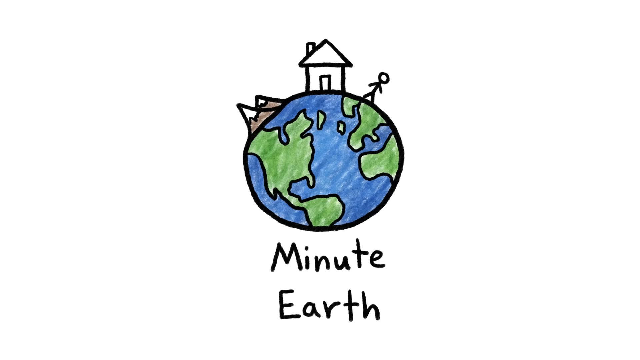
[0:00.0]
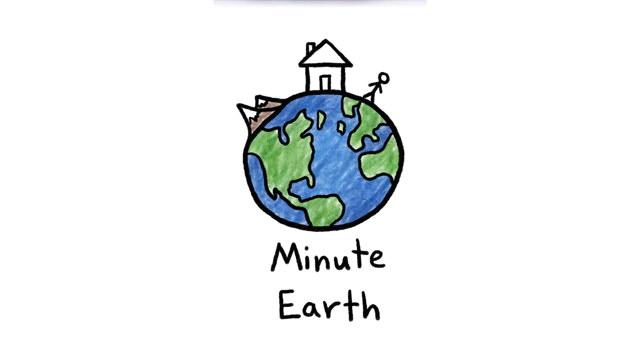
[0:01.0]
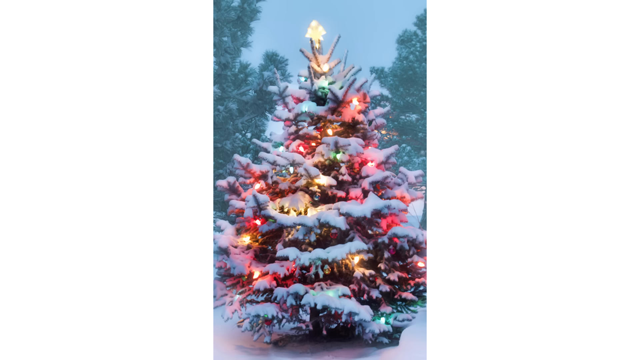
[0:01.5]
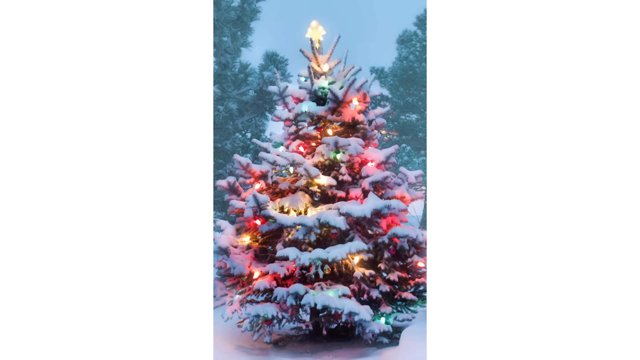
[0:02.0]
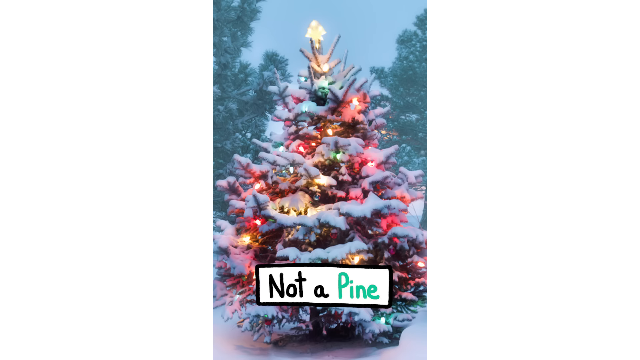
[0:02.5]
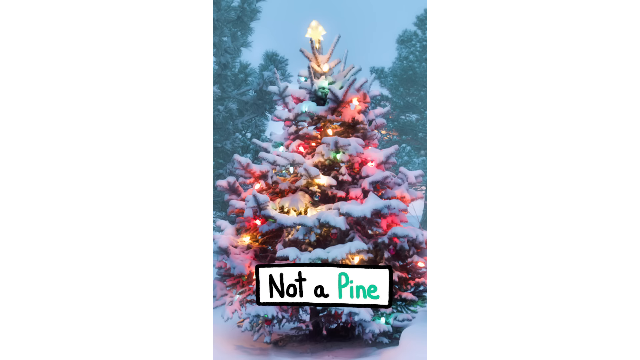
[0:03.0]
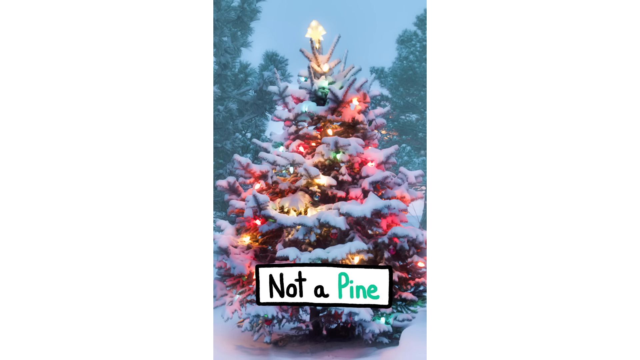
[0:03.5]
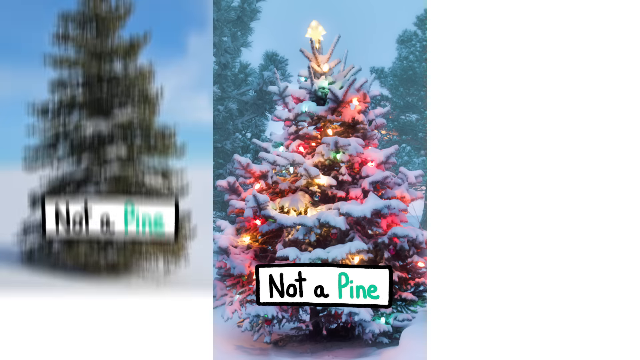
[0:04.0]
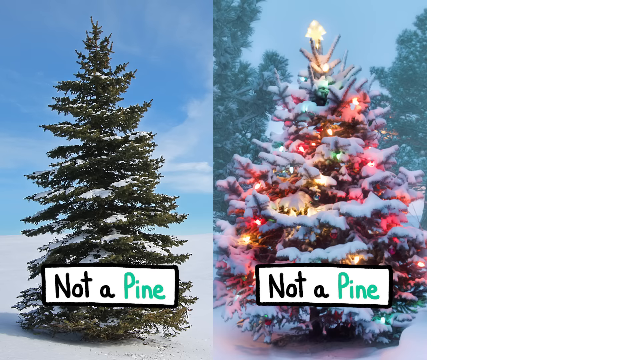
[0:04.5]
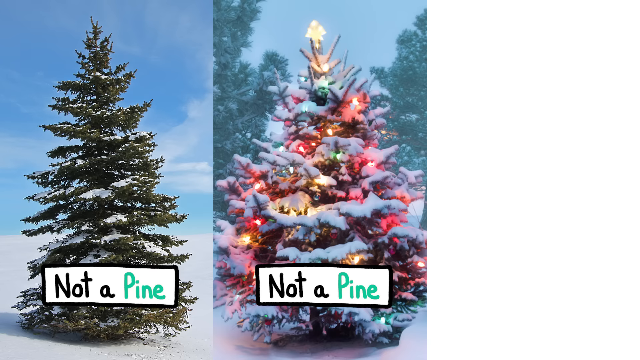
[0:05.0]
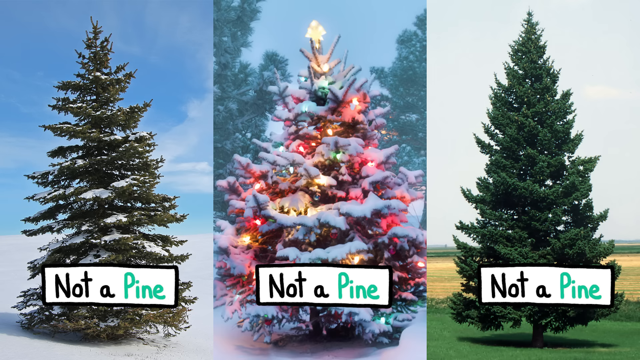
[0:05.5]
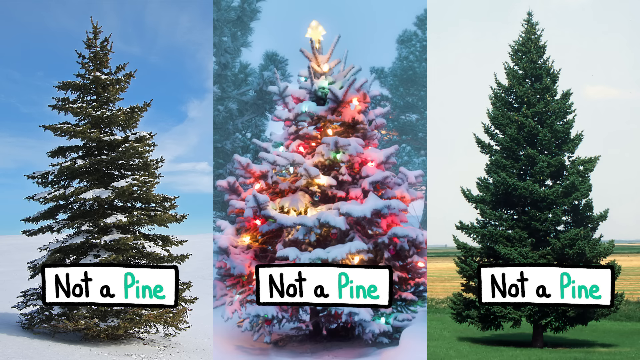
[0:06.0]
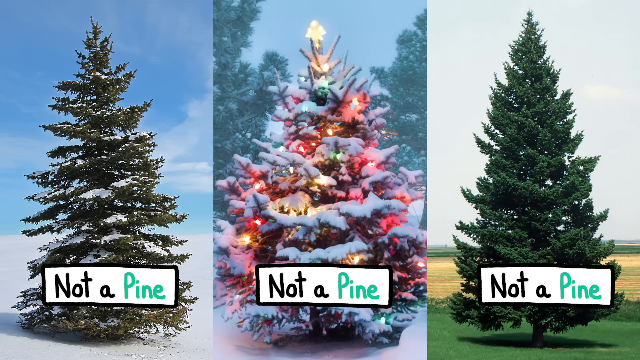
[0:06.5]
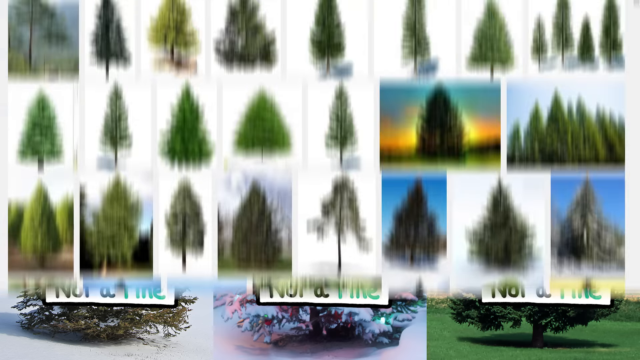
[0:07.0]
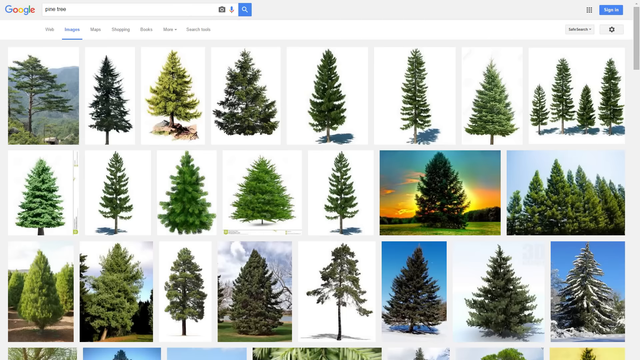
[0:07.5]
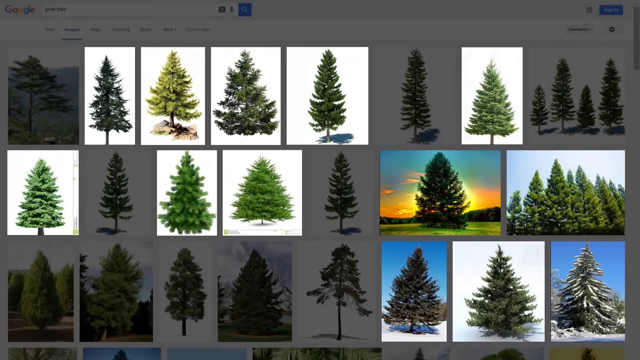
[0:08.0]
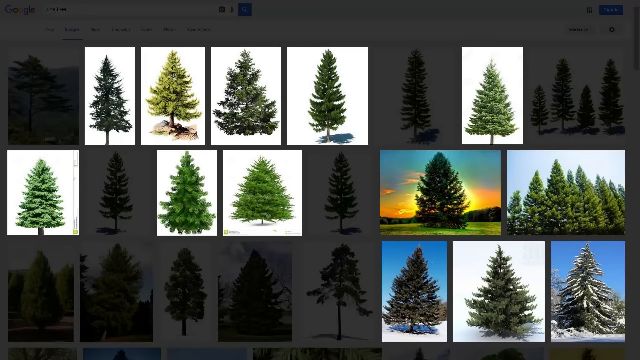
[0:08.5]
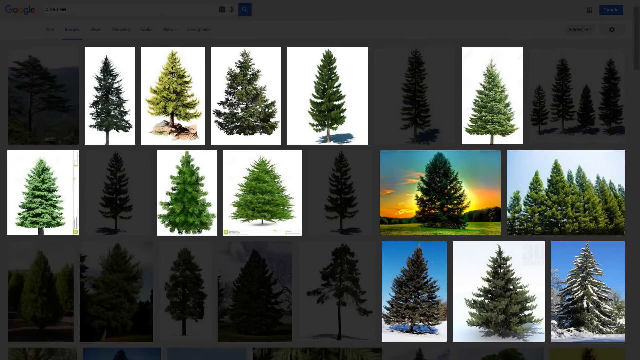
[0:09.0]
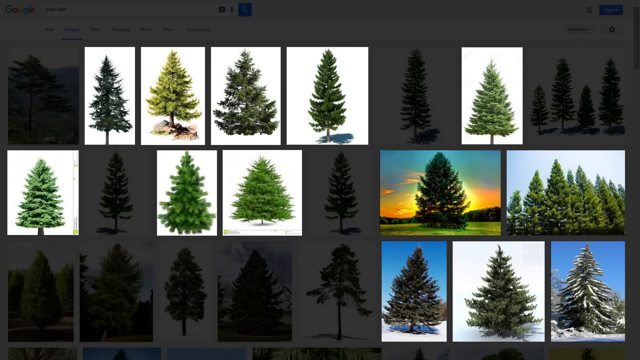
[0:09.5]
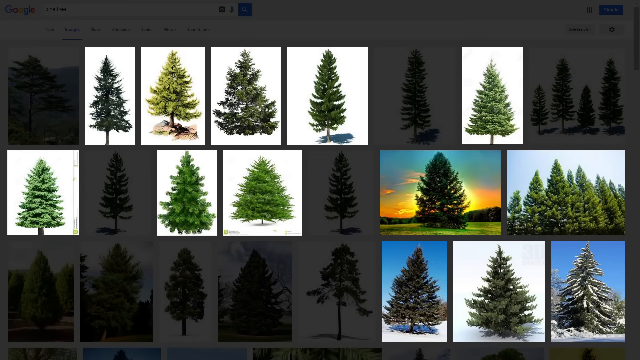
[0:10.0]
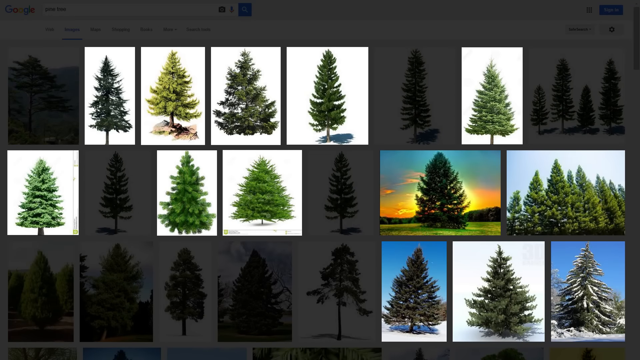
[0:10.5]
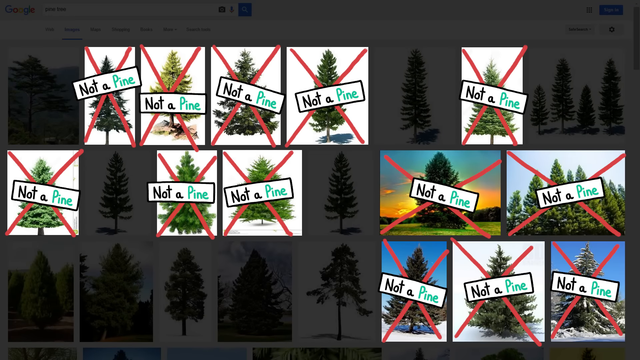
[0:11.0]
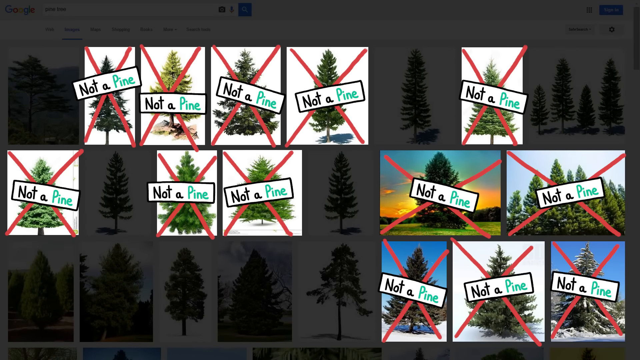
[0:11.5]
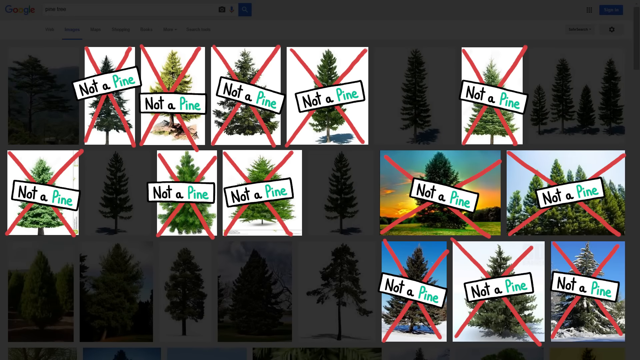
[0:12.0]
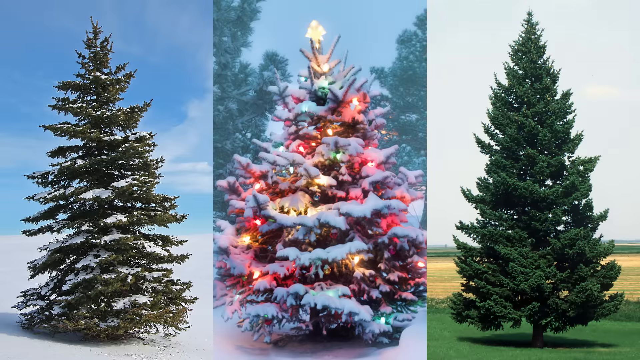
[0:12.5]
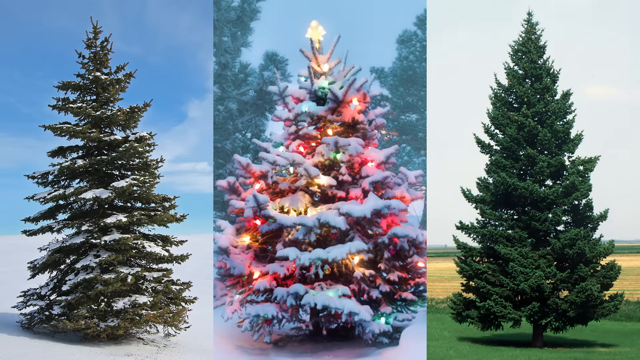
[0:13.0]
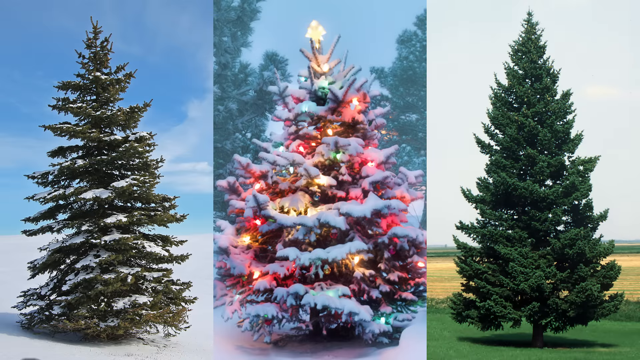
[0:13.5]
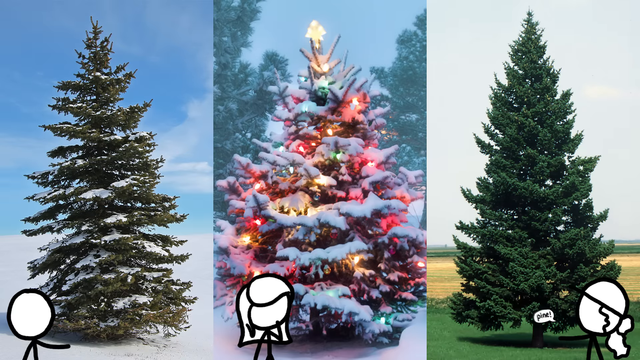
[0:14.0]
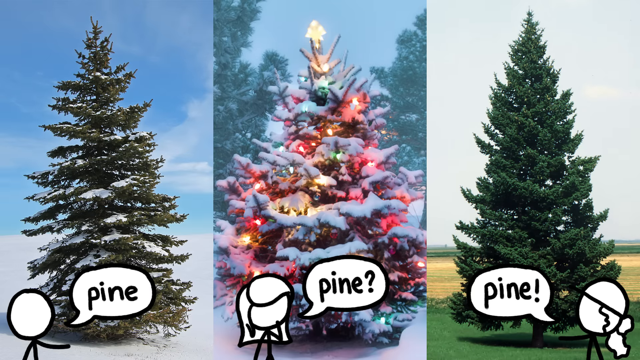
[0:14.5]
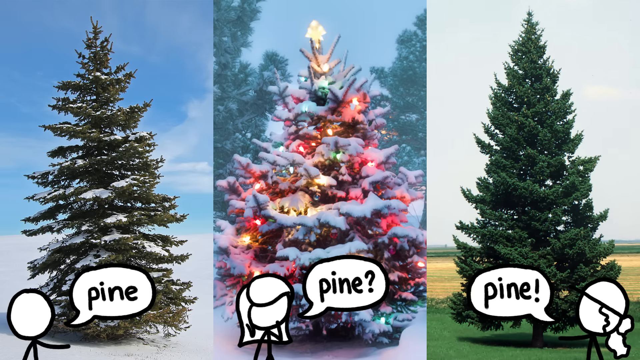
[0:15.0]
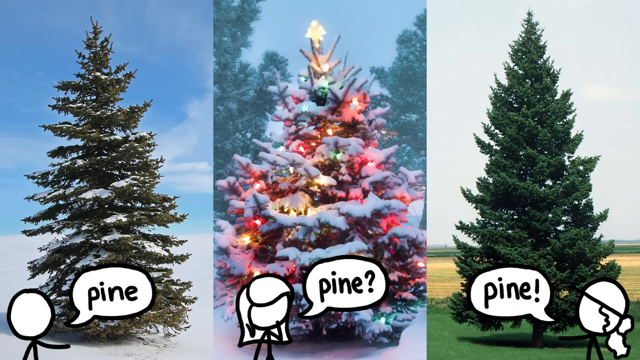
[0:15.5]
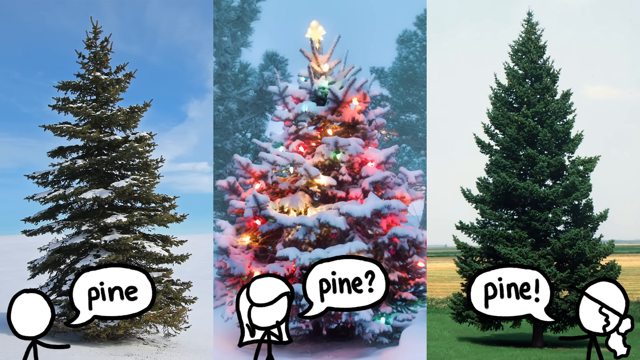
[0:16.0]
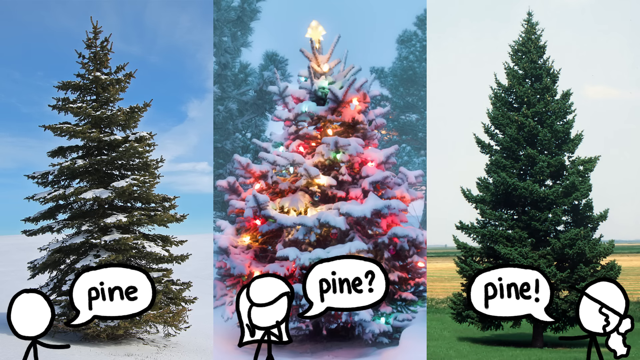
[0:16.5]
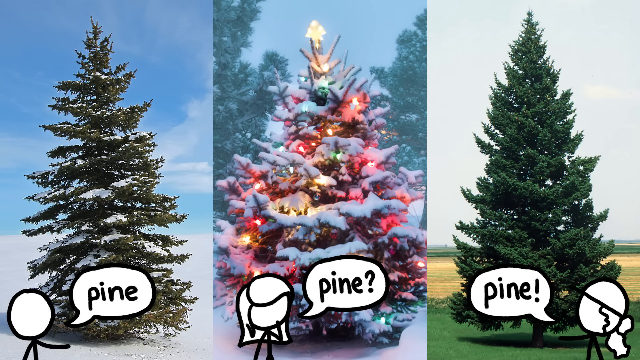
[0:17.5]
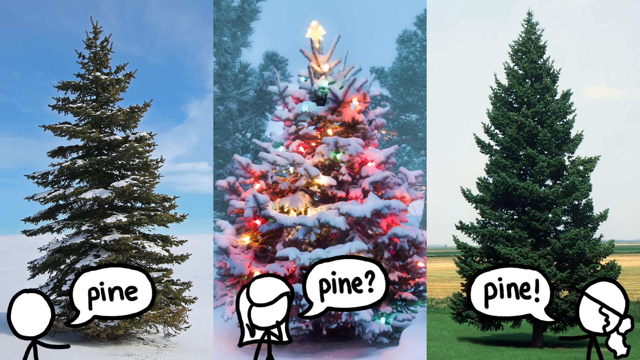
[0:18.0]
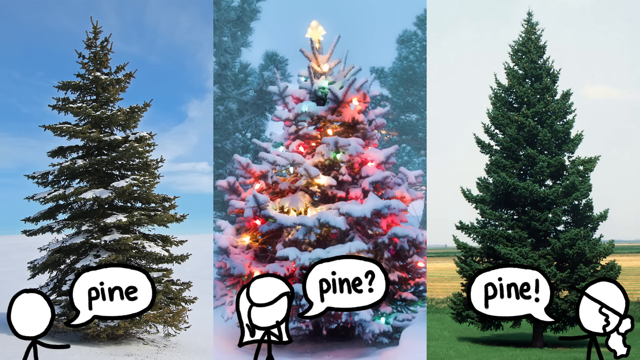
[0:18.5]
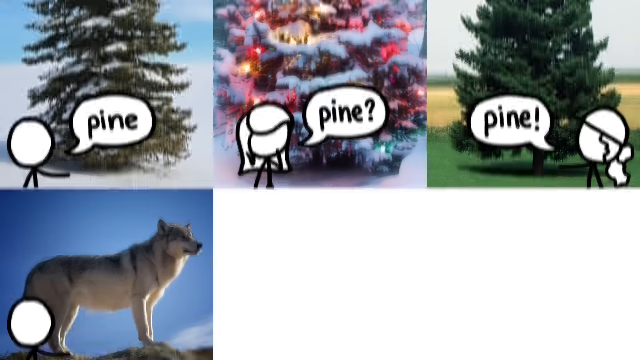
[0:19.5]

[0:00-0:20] The video opens on a solid white background with a representation of planet Earth in the center: mountains off the left side, a person standing on top of the right side, and a house at the very top in the center. Underneath it says "Minute Earth". Drop-down cards then come in from the top, looking like the fronts of Christmas cards. One looks like a pine tree covered in lights, stars and snow, labeled "not a pine". The one on the left shows what looks to be a live tree standing on a hilltop with a little snow on the edges of its branches, also labeled "not a pine". The one on the far right shows what looks like a cedar tree standing out in a yard, labeled "not a pine" as well. A Google search appears, highlighting pine trees and marking them all as "not a pine". A question mark pops up at the bottom with the words "pine, pine, not a pine", and finally a picture of a wolf pops up.